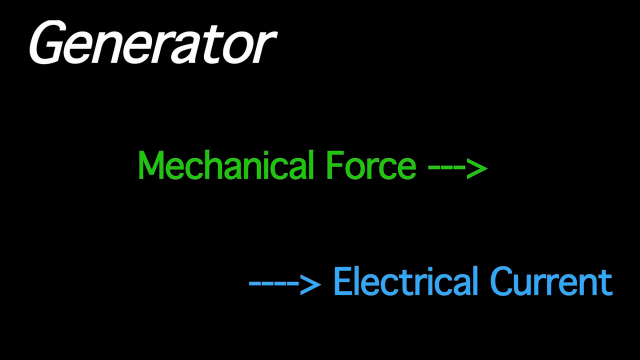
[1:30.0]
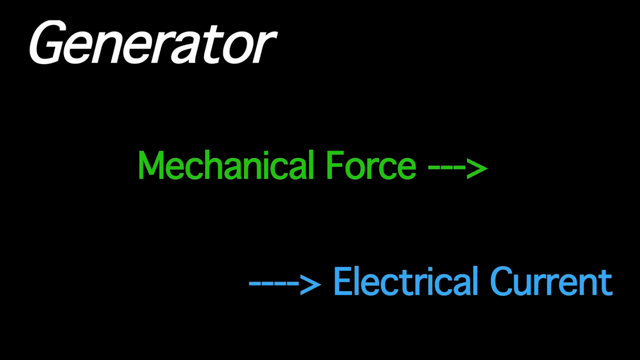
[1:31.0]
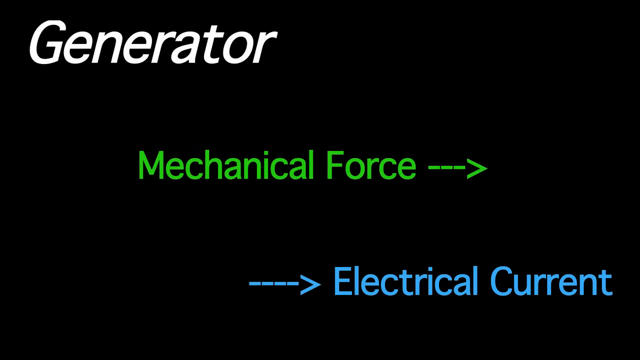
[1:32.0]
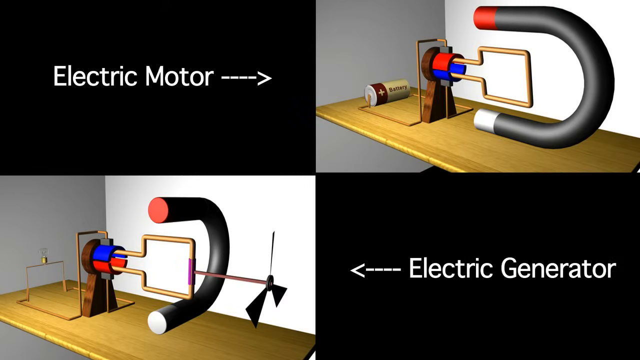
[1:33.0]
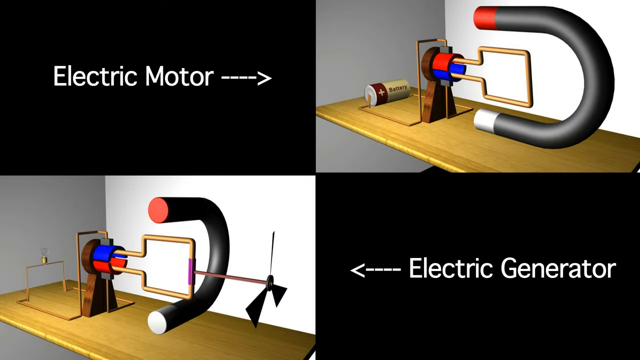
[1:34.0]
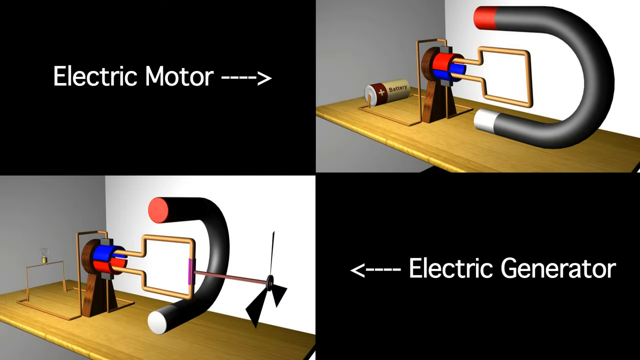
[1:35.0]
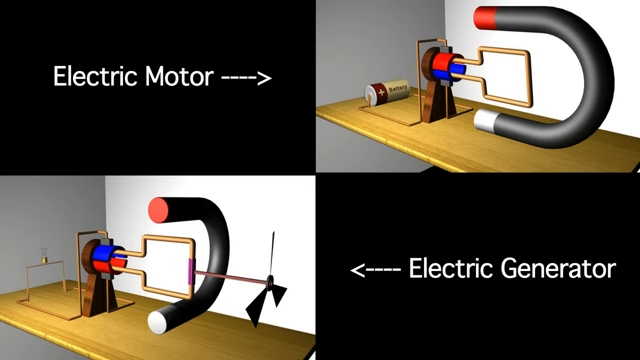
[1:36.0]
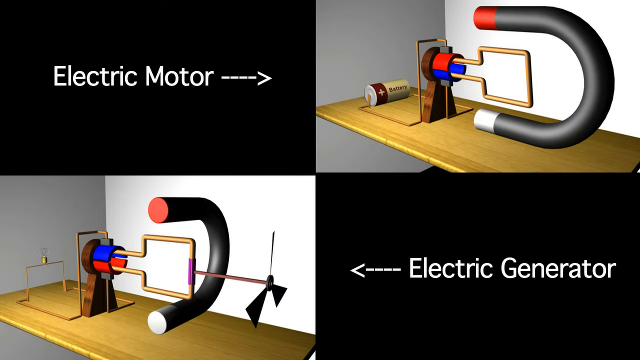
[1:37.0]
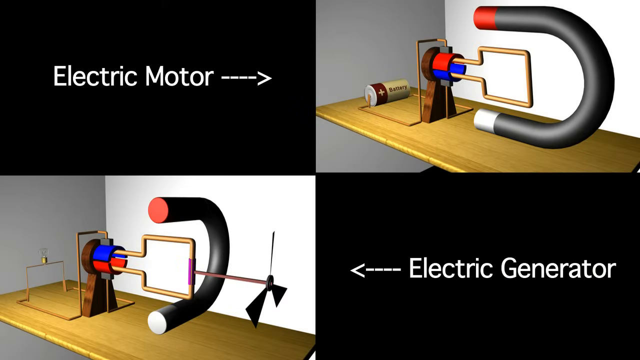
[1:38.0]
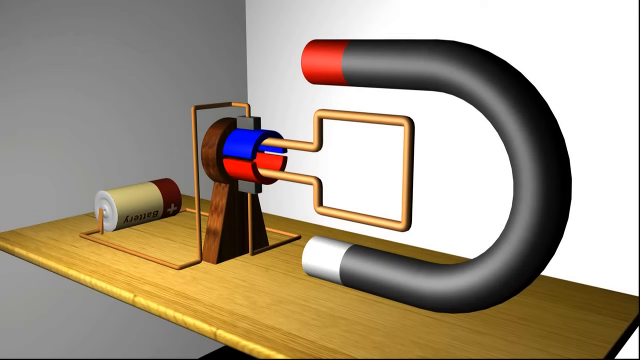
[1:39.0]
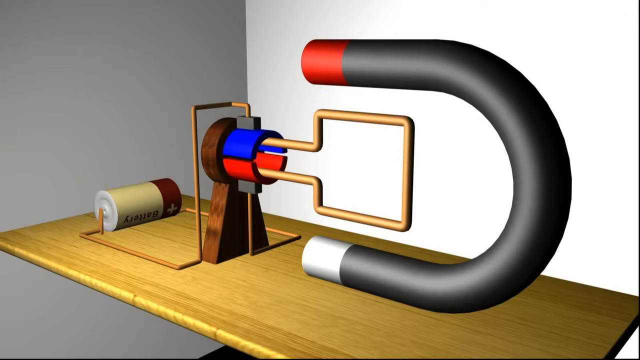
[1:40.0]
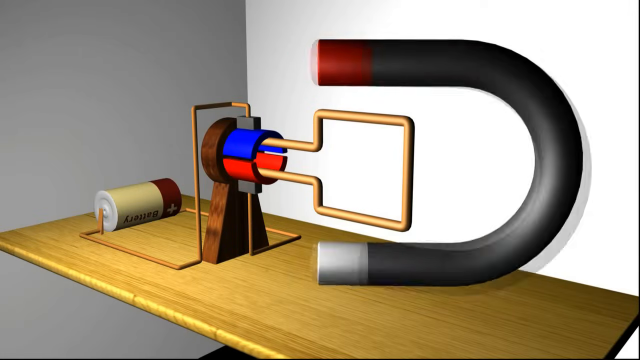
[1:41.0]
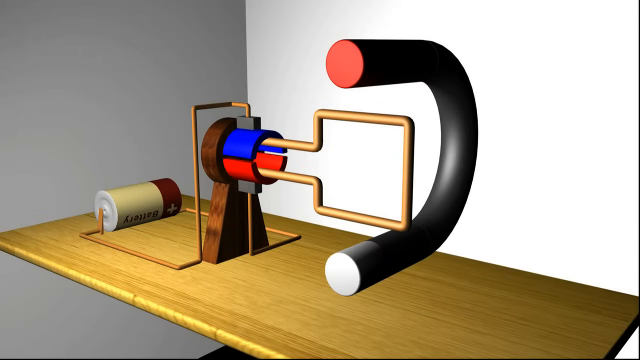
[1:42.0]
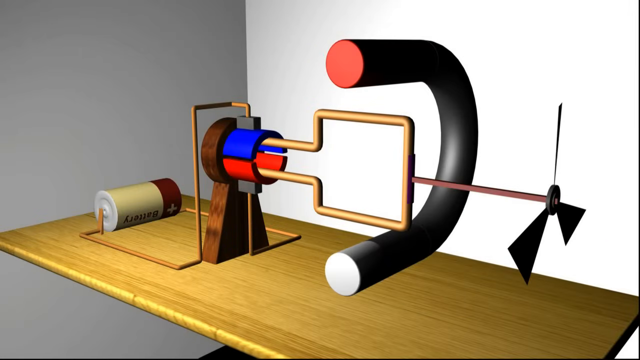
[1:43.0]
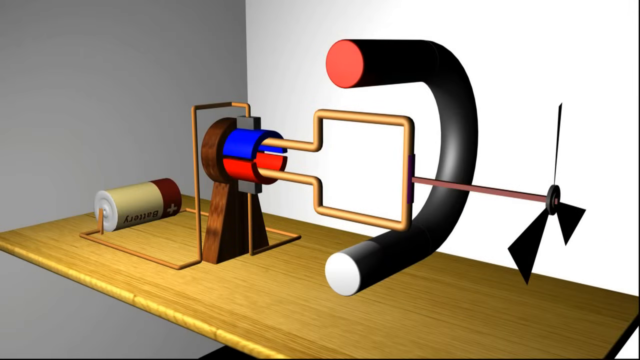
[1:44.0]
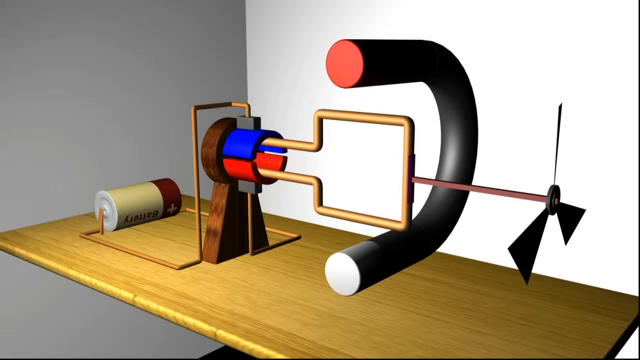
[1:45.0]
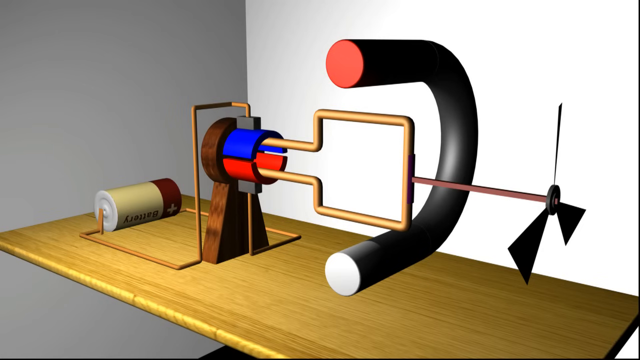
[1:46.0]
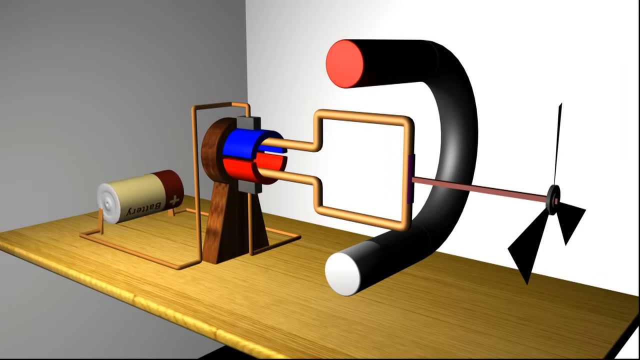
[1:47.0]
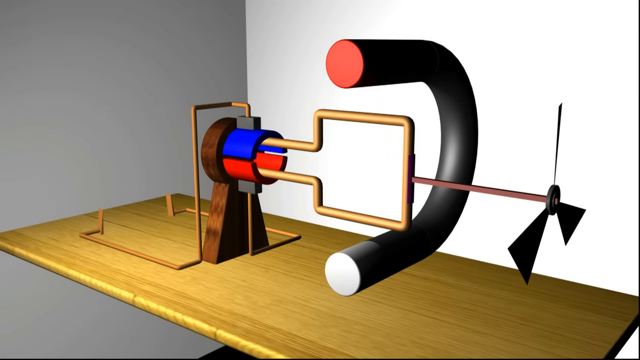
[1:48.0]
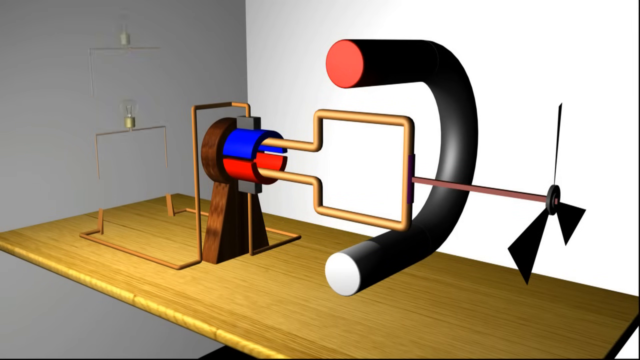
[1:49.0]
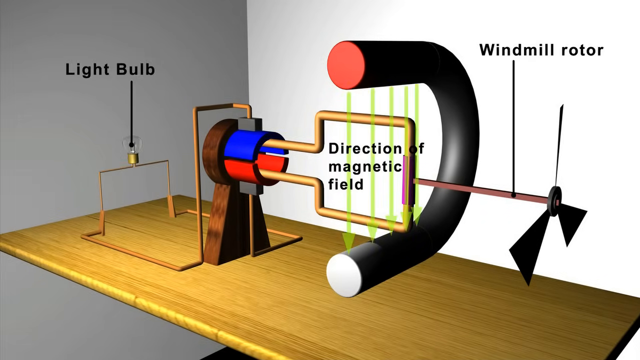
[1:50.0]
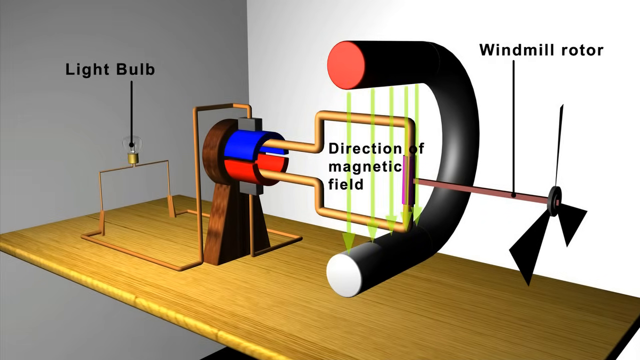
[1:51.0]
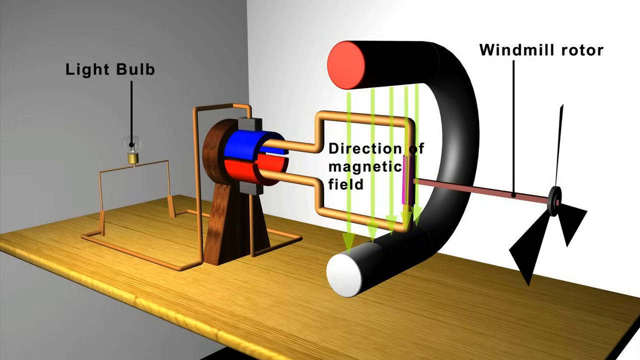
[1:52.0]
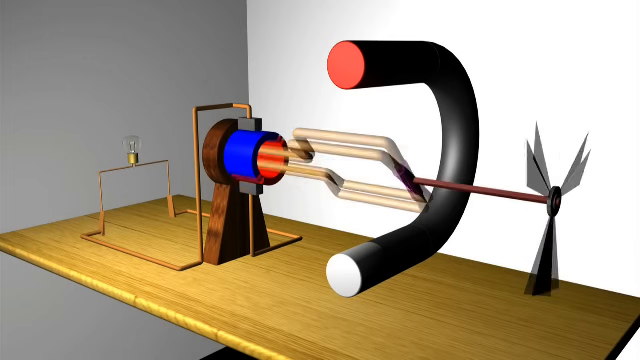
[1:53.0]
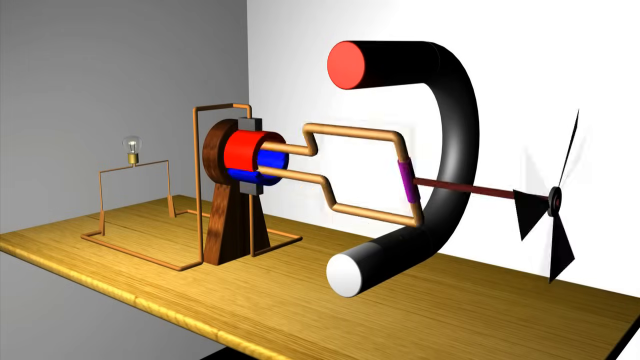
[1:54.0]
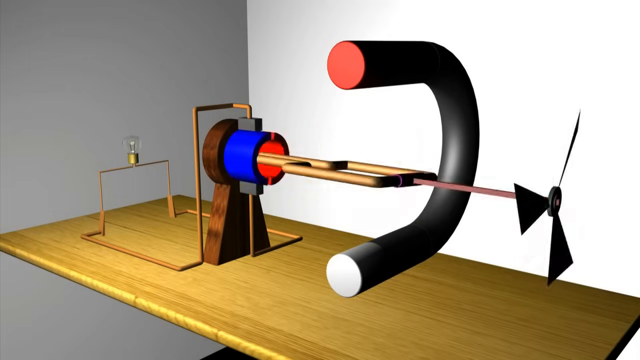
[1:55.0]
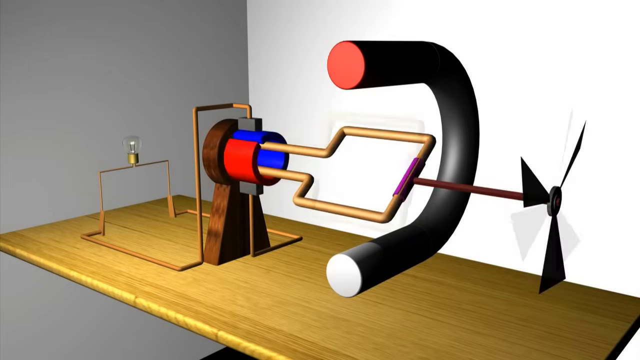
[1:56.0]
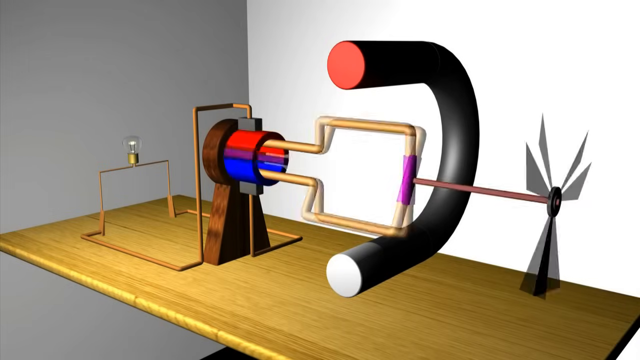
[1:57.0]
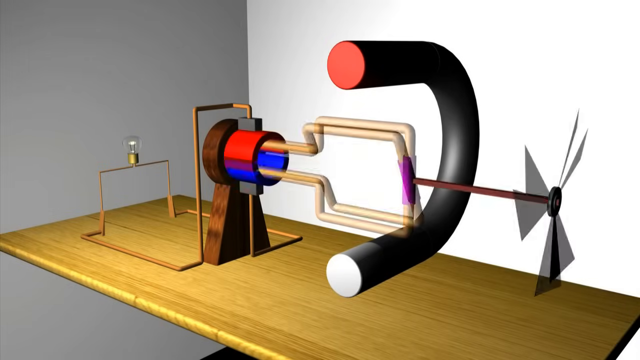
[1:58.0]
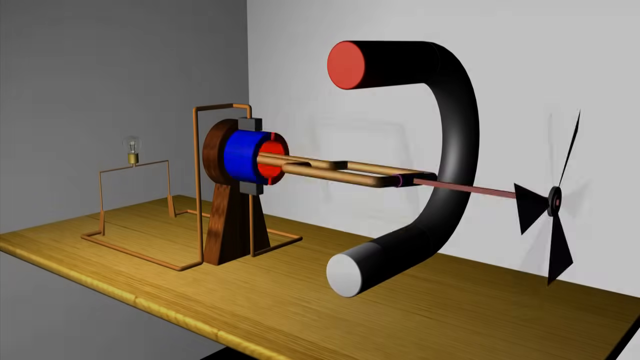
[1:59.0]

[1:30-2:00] The black screen with the text "generator", "mechanical force" and "electrical current" remains. The view then switches back to the four-image page showing the electric motor and the electric generator, and zooms back in on the electric motor image. The magnet turns and the fan comes in onto the copper wire loop, changing the electric motor into the electric generator in a smooth transition. The battery flies out of its place, and a light bulb is placed where the battery was. The parts are then labeled on the diagram: the light bulb on the left, the windmill rotor on the right, and the direction of magnetic field in the center. The diagram becomes animated as the windmill rotor spins the copper wire loop and the light bulb turns on. The screen then fades to black.